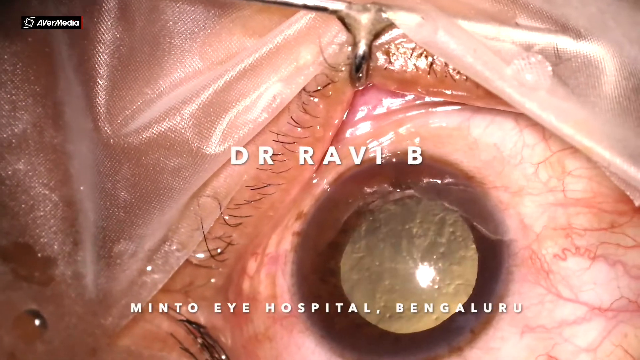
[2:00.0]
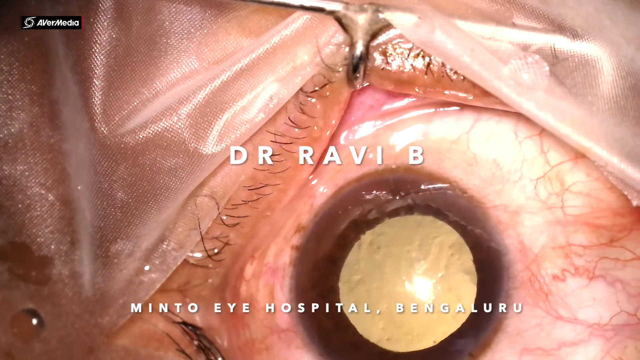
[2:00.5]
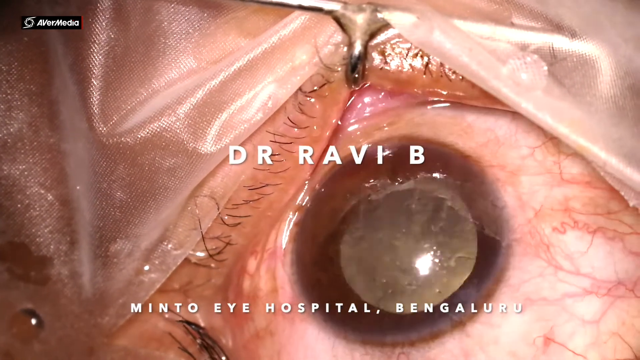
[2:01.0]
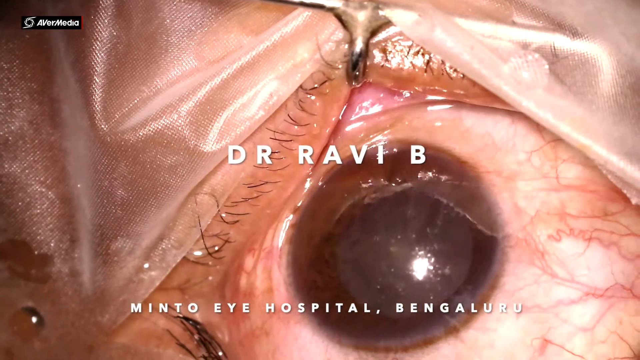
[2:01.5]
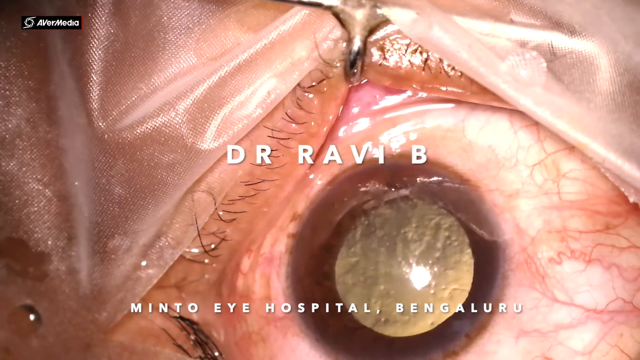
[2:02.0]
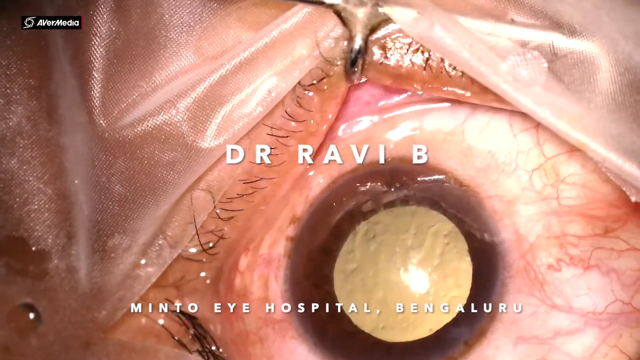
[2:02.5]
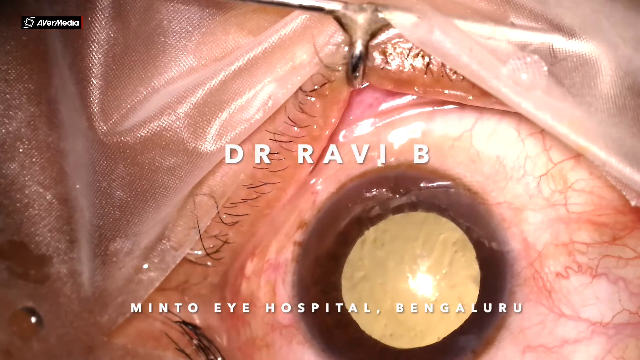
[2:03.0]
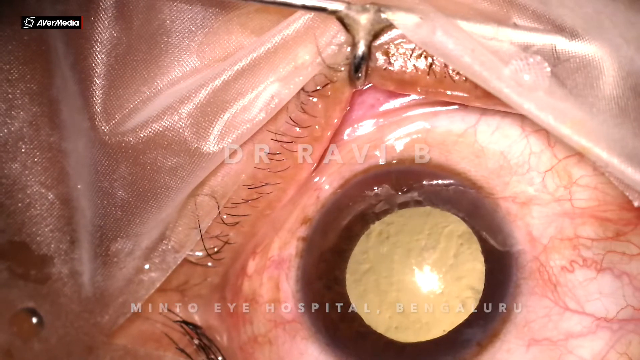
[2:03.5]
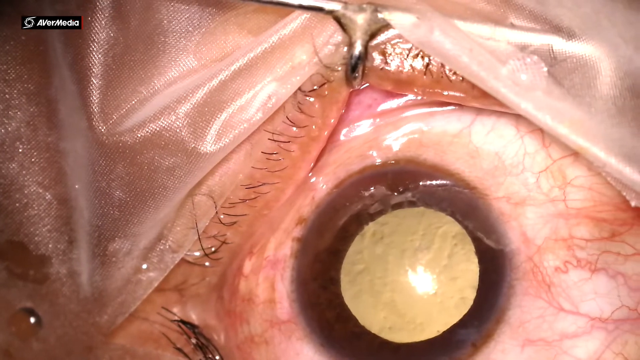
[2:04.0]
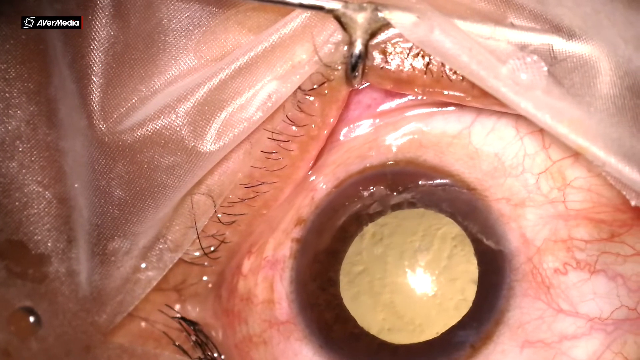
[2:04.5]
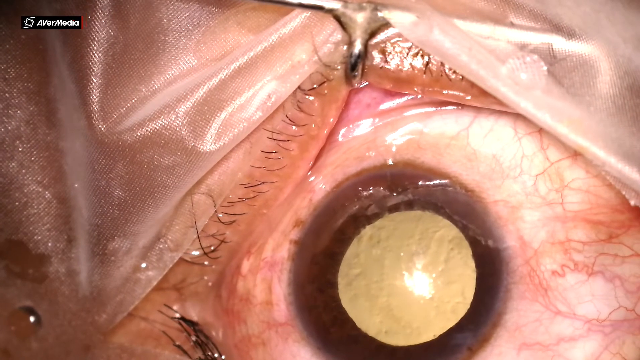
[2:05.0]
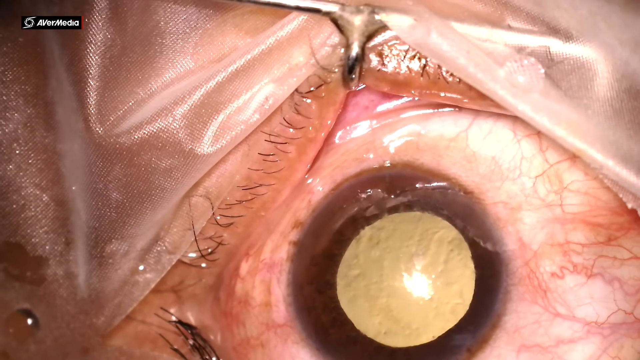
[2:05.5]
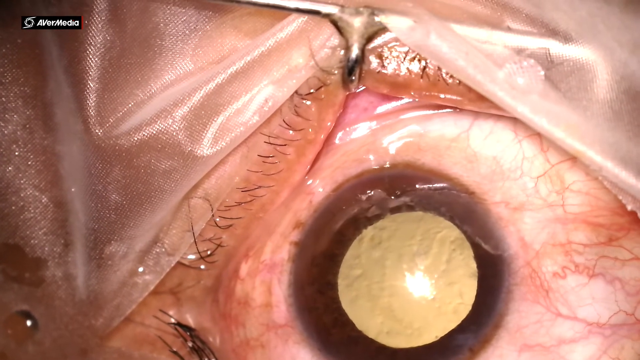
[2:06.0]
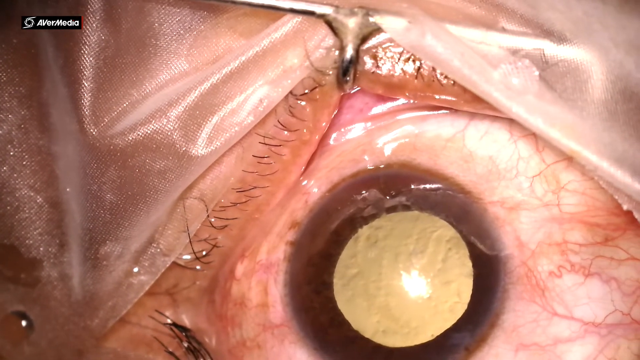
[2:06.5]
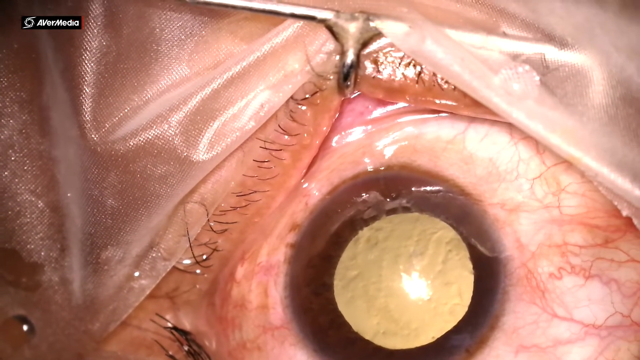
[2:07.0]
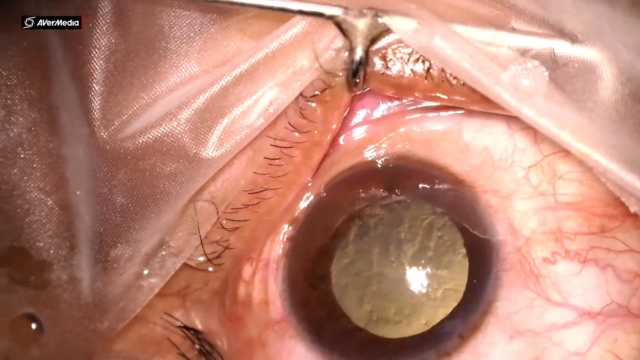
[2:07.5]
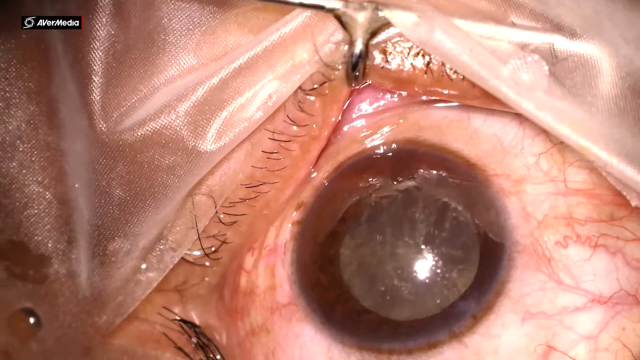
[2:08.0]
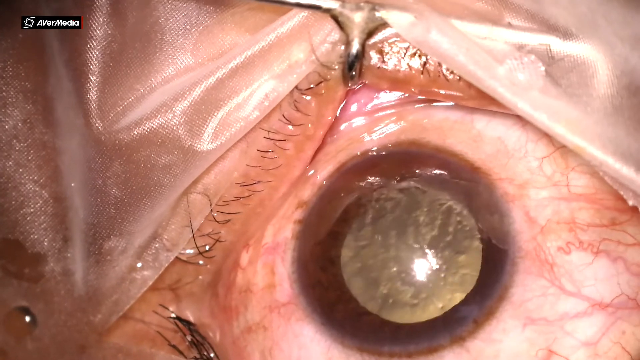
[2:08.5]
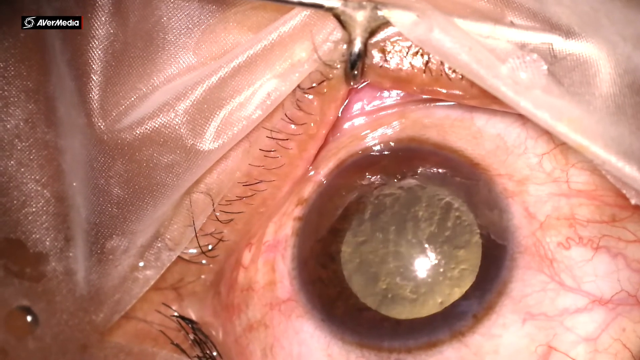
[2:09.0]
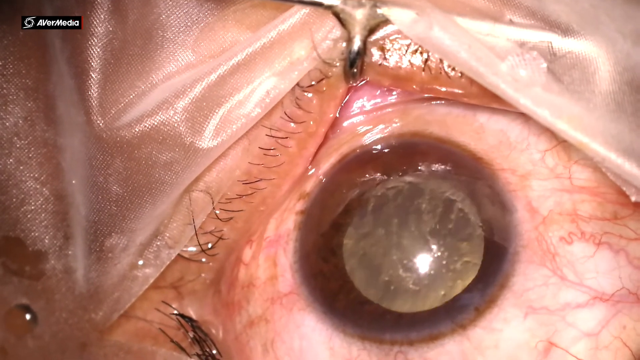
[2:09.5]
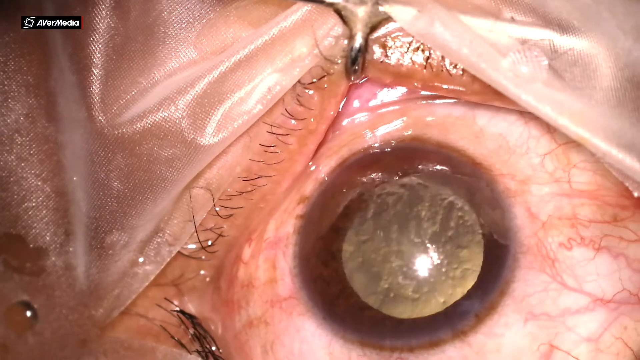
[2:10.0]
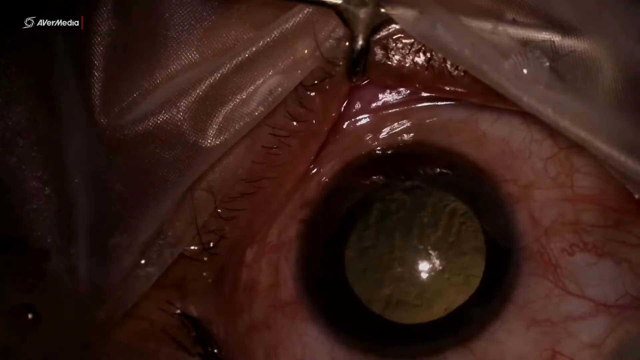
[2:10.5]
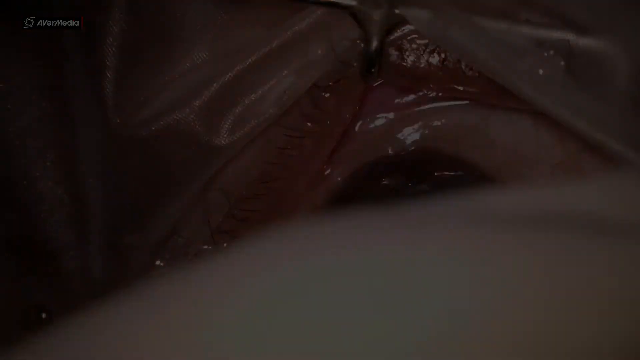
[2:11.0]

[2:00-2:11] A name, apparently of the person who narrated or made the video, appears: "Dr. Ravi B." Text at the bottom reads "Minto Eye Hospital, Bengaluru". The eyeball continues looking up and to the left, seen from the same angle at the top left of the eye, with the positioning unchanged; it appears to be left to calm down and recover.